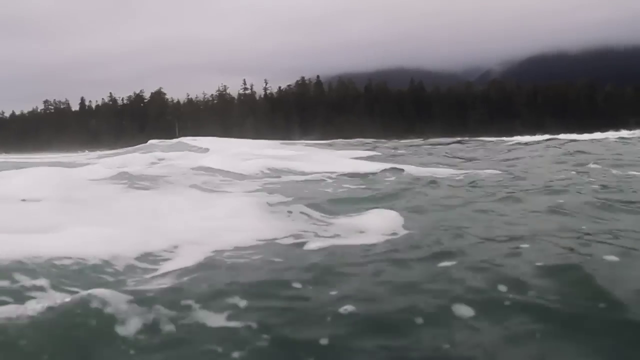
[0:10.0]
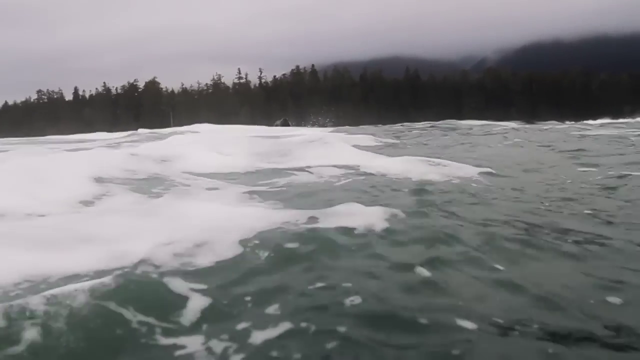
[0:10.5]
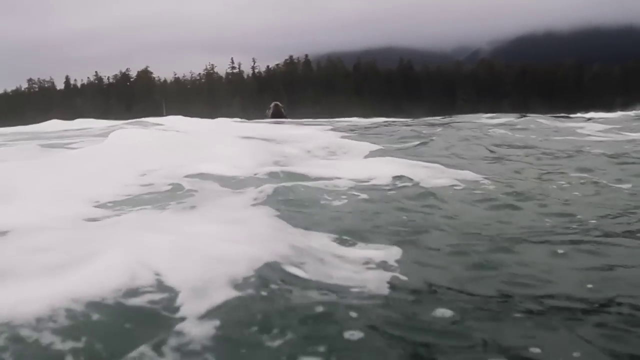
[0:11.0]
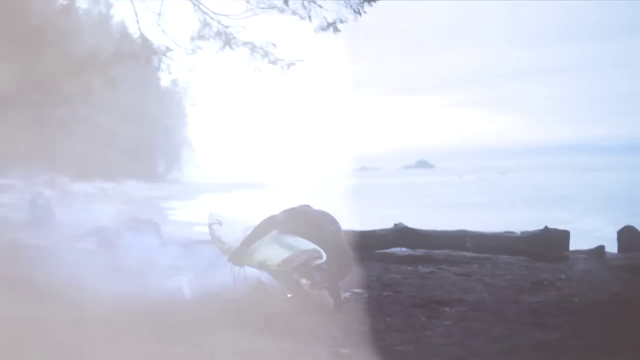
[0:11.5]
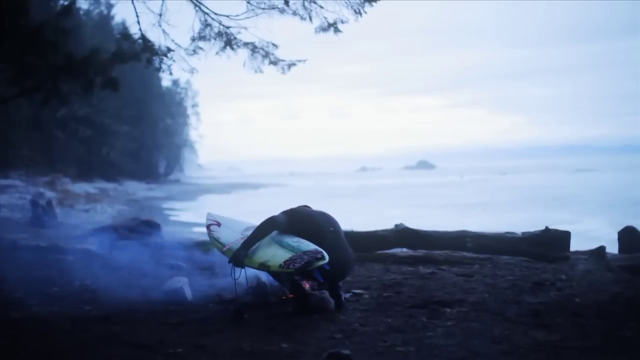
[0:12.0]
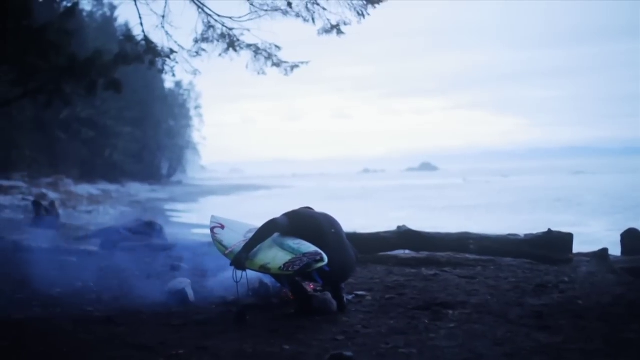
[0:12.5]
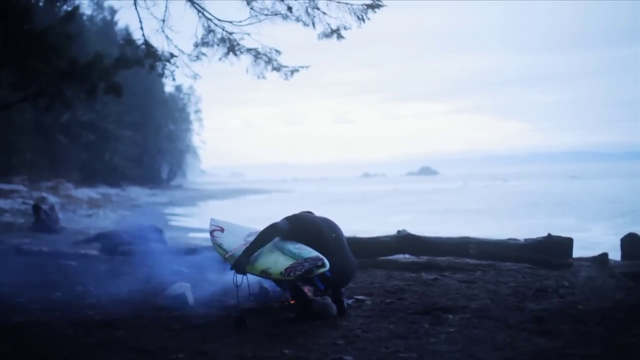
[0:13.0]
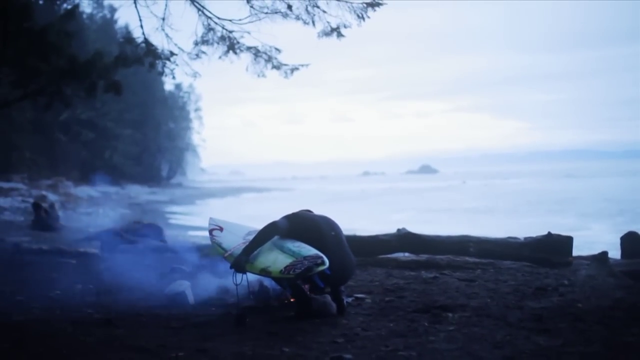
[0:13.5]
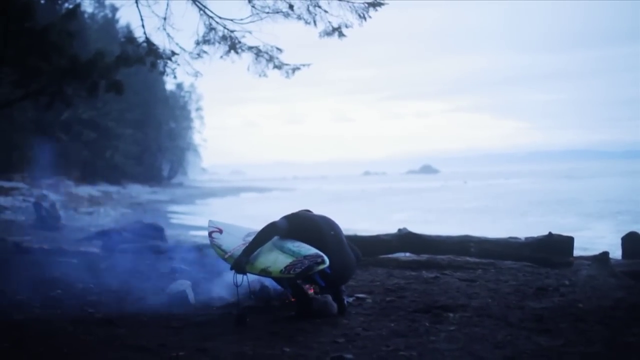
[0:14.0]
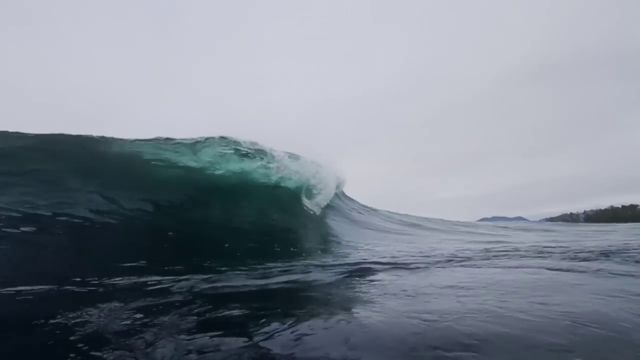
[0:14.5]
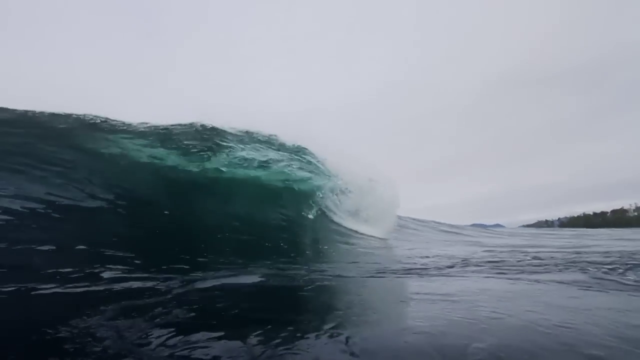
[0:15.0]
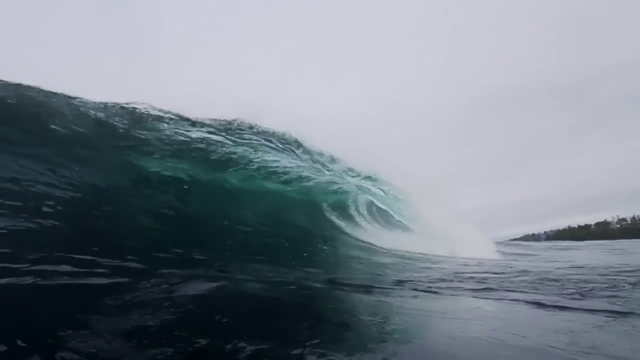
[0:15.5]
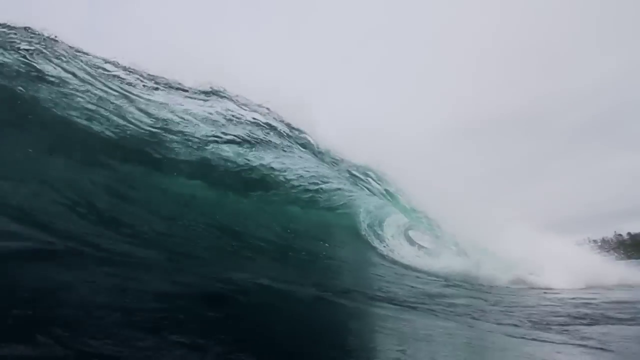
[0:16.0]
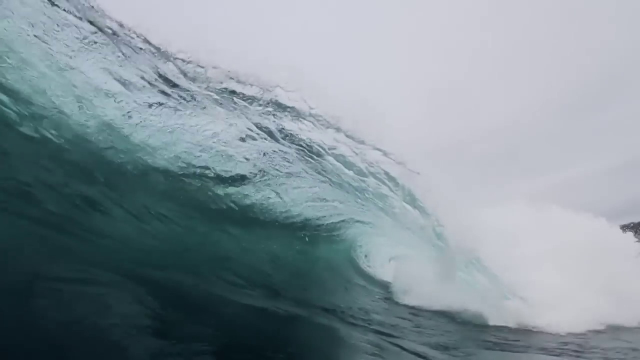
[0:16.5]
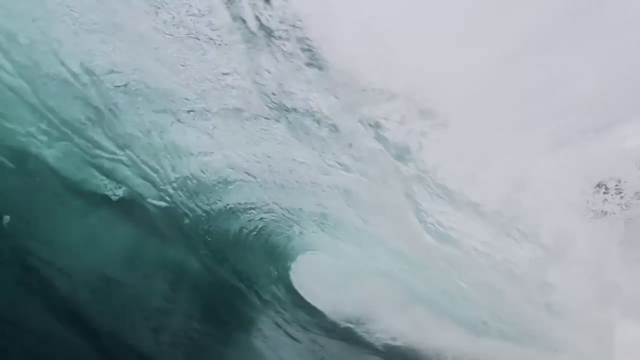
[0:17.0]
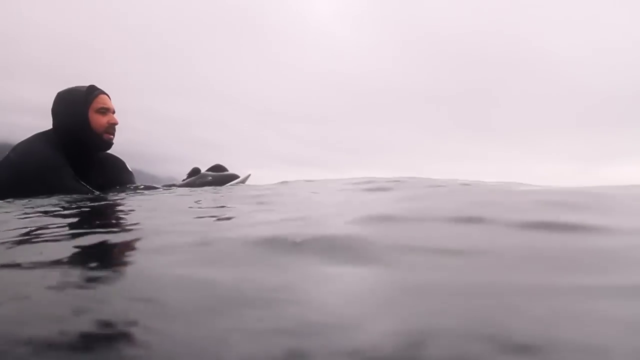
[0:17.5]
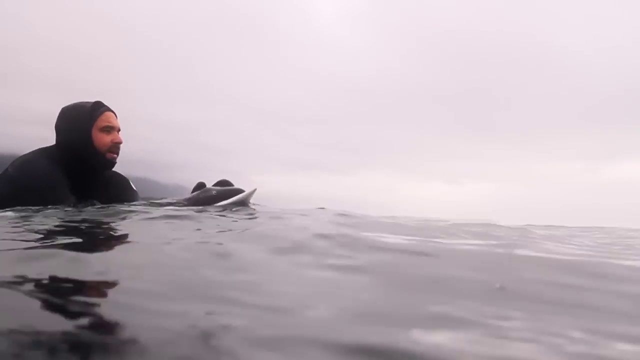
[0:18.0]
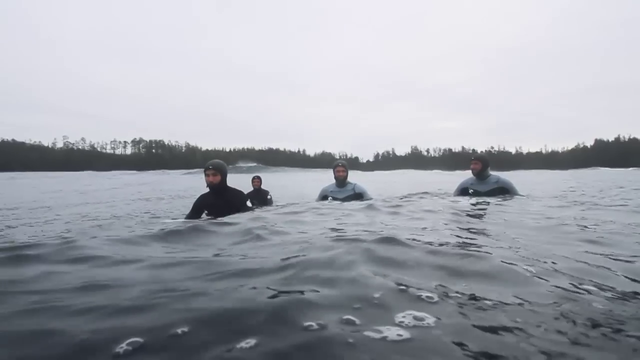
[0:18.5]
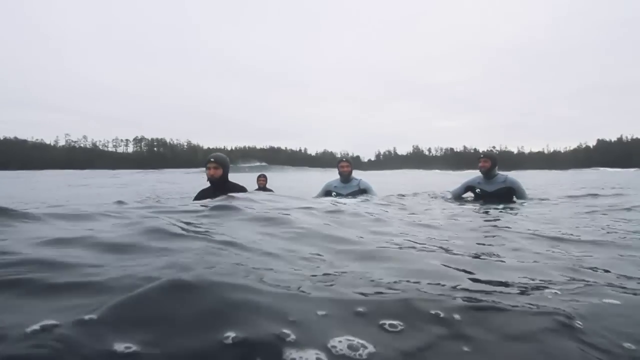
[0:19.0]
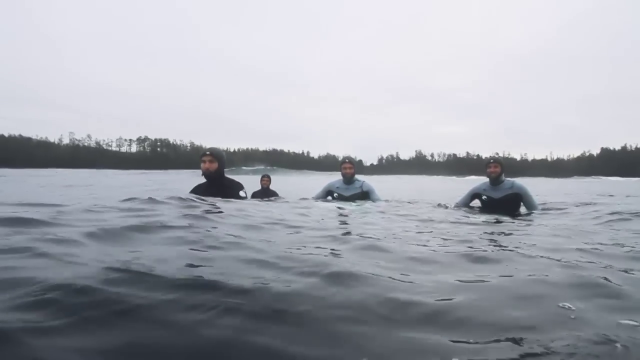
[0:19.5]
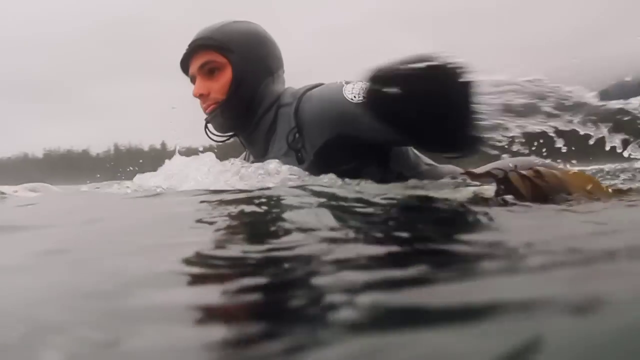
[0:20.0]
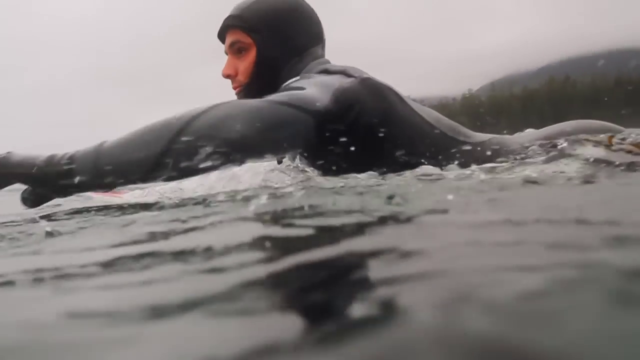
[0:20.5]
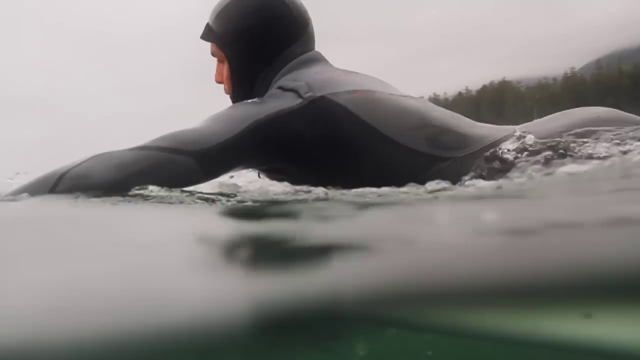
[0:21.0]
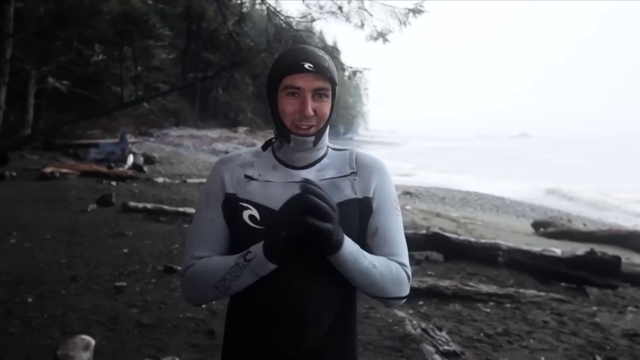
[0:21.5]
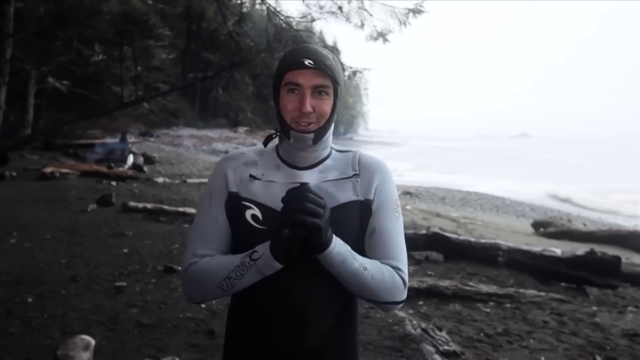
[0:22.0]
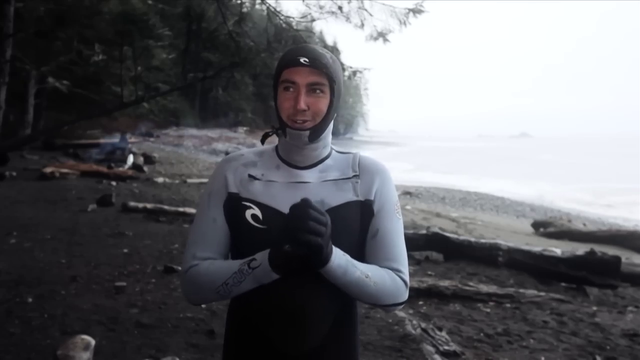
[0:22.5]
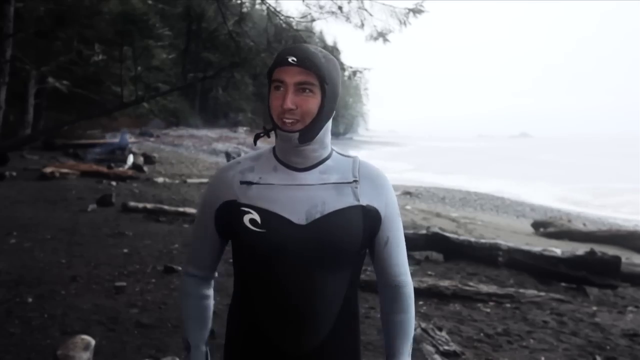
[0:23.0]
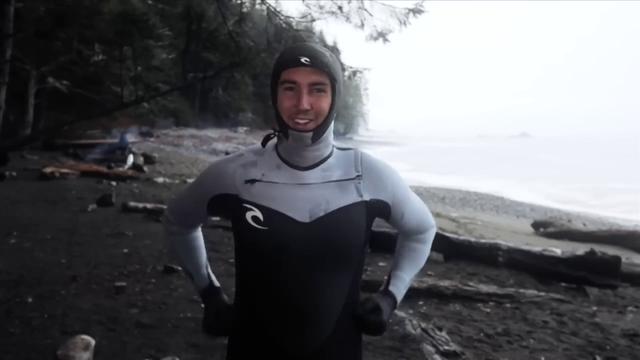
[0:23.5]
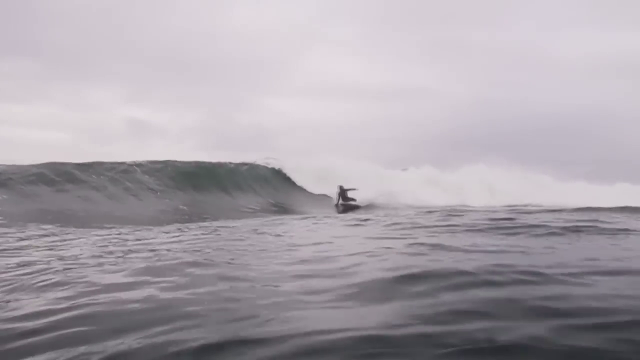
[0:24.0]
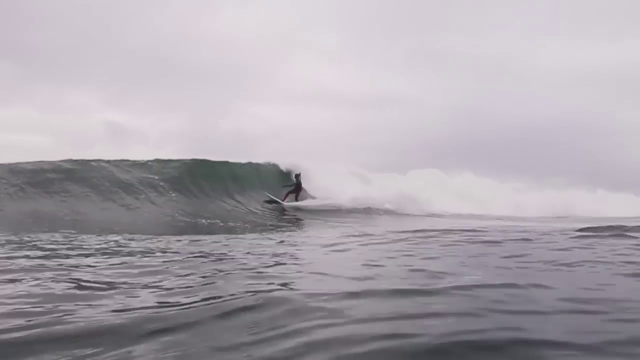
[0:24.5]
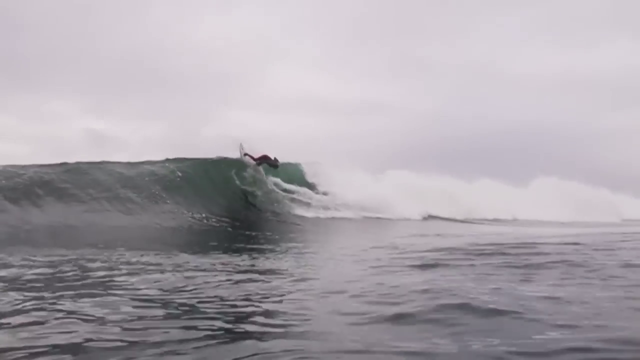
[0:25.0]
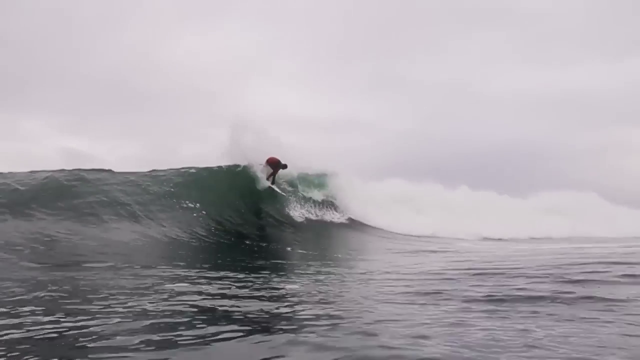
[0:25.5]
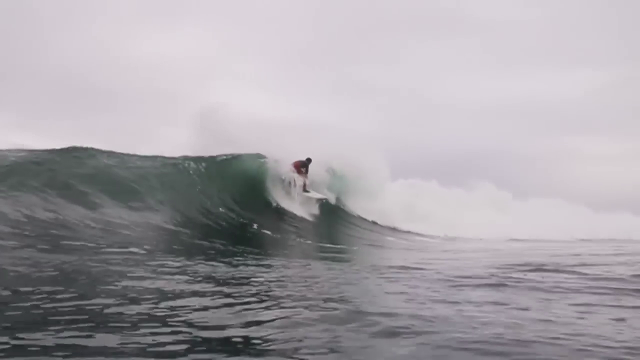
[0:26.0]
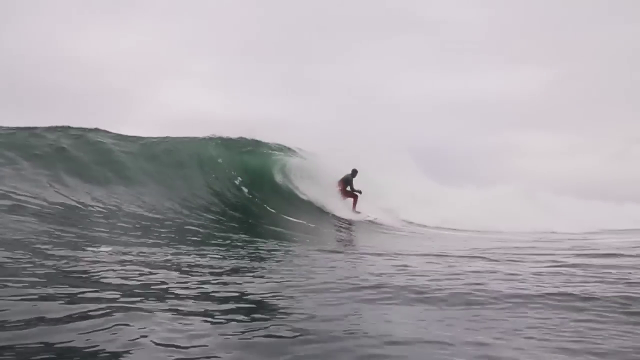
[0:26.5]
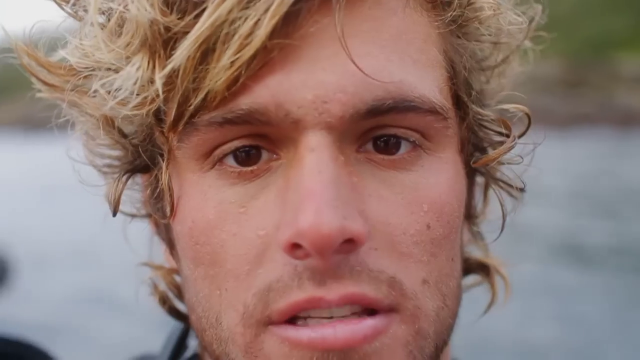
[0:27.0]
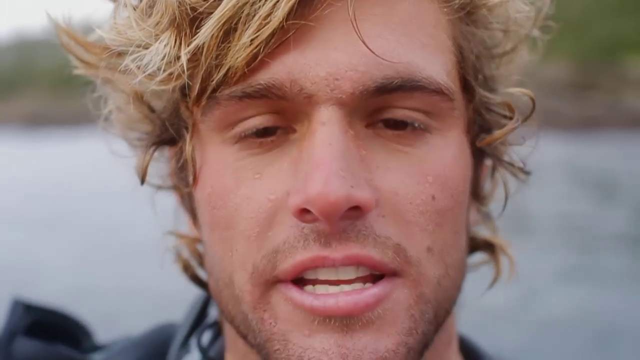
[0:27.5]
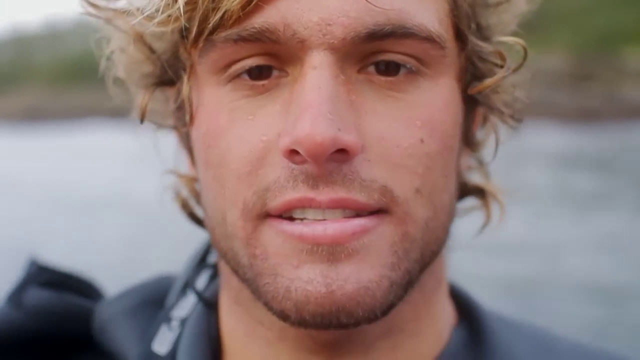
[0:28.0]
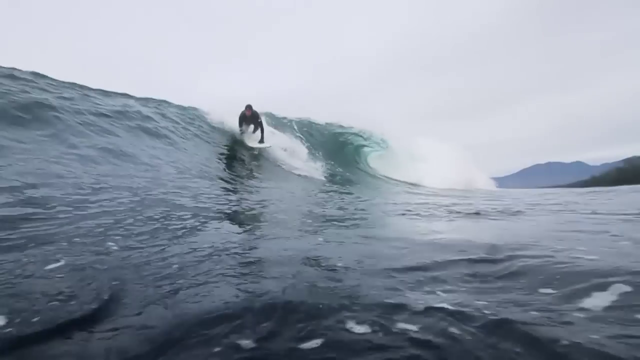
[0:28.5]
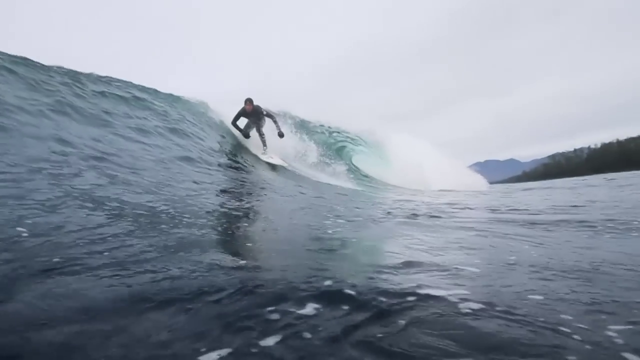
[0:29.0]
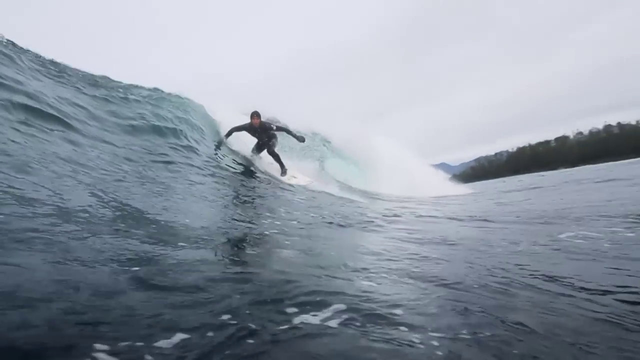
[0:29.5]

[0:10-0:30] A man in a wetsuit with a surfboard is on the beach near a fire, apparently about to go surfing. A wave turns over in the ocean. A man in a wetsuit is out in the ocean on a surfboard, ready to surf, with only the water level and the man visible. Four men in wetsuits wait in the water, seemingly waiting for a wave, with the tree line of the landscape and clear skies behind them. A man paddles in the water, filling the whole screen; his gray wetsuit covers his head so that his face is barely visible. The man standing on the beach in a wetsuit appears again, talking. He is completely covered, with only a circular outline of his face showing; he is a white man, and only a little of his face can be seen. Behind him is the beach coming up onto the land, with a bunch of logs and a tree line. The man out in the water surfs on a wave, then a man with blonde hair talks for a few seconds. The shot ends with the man in the wetsuit riding the wave on the surfboard.